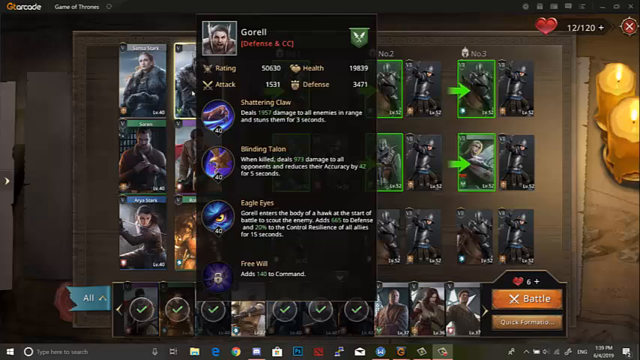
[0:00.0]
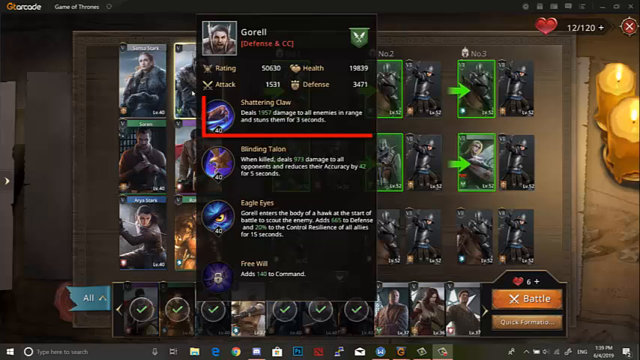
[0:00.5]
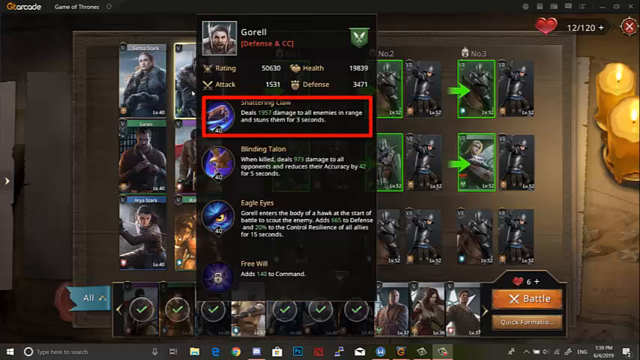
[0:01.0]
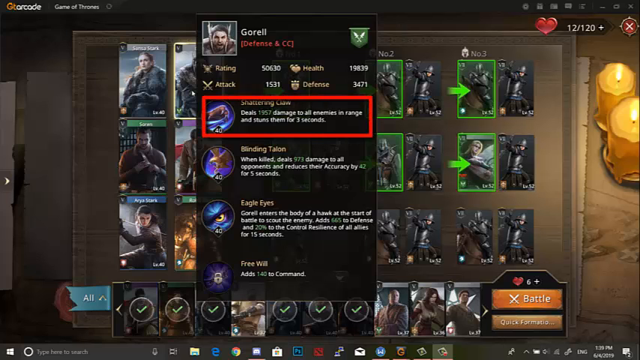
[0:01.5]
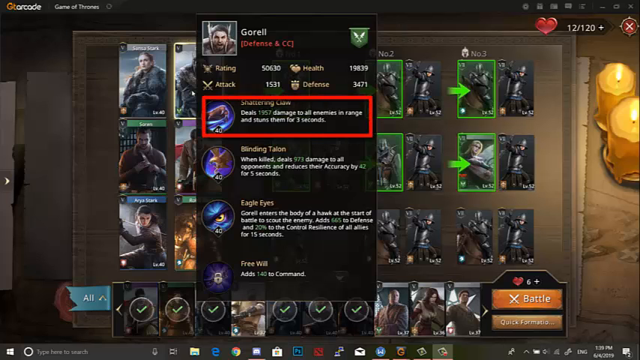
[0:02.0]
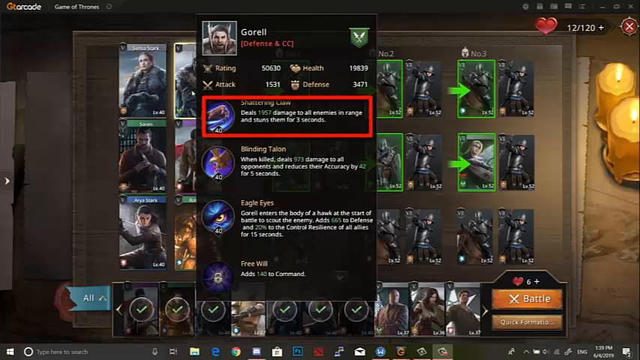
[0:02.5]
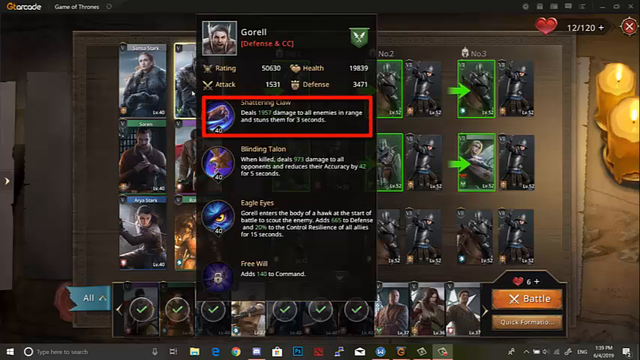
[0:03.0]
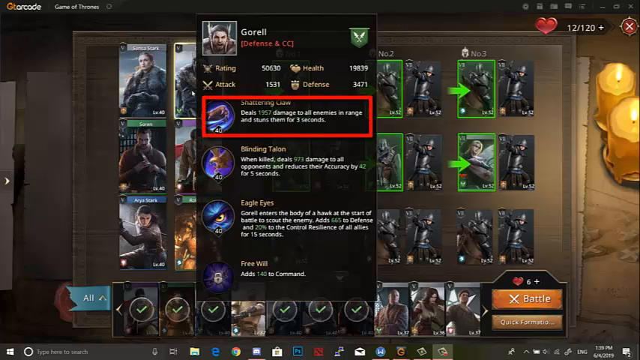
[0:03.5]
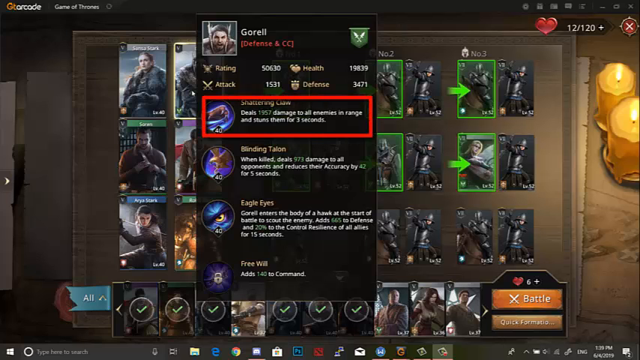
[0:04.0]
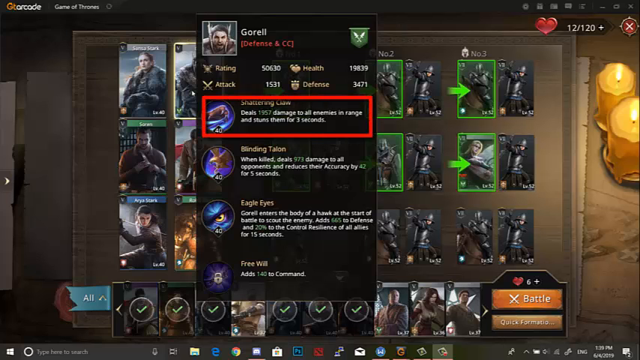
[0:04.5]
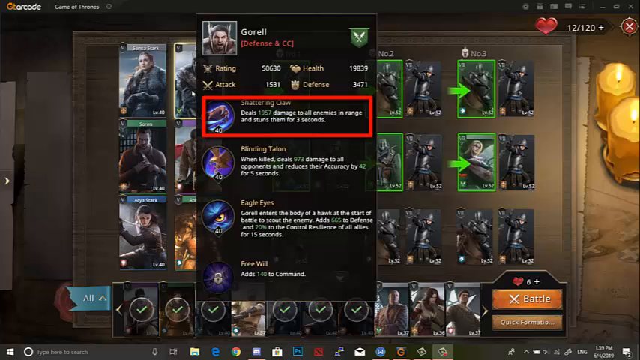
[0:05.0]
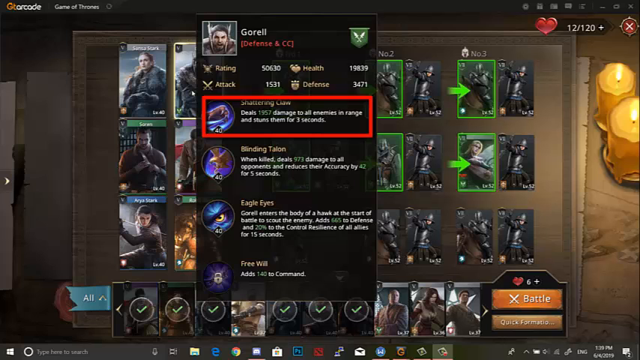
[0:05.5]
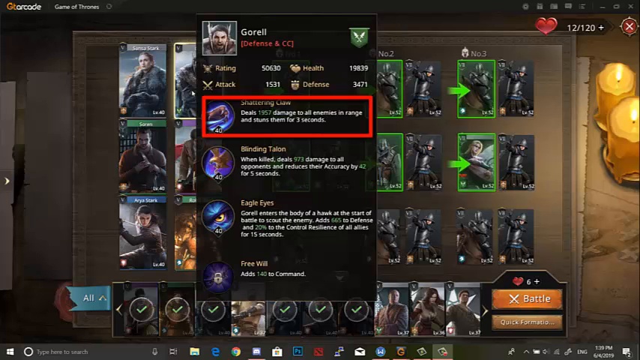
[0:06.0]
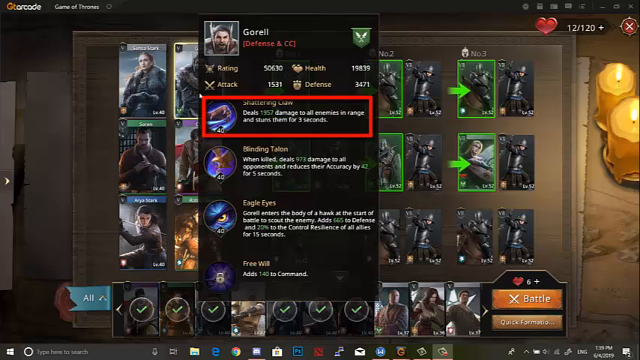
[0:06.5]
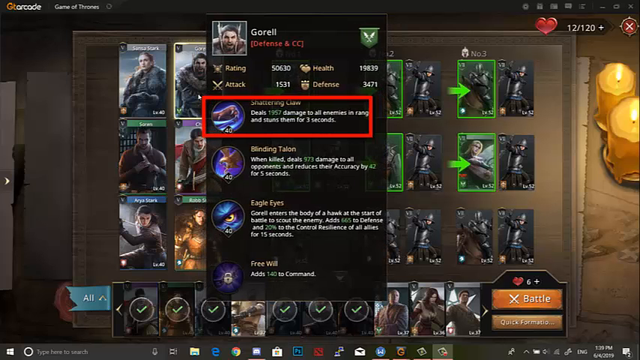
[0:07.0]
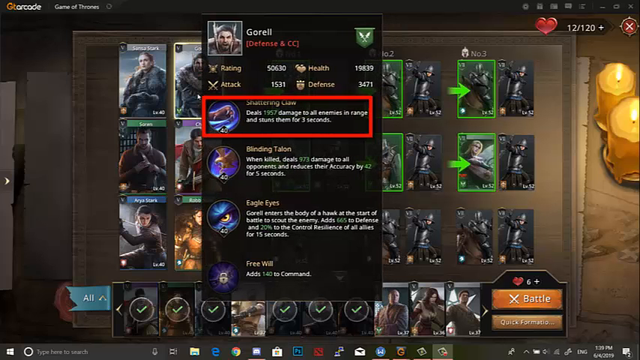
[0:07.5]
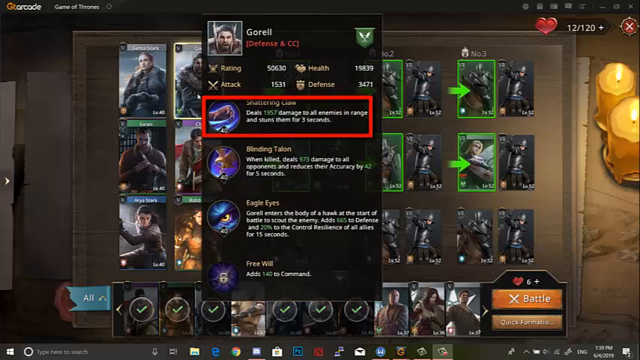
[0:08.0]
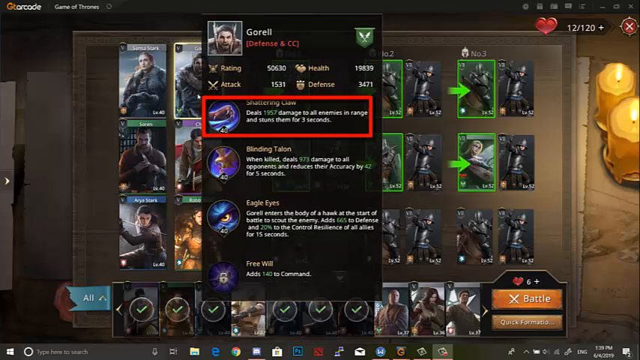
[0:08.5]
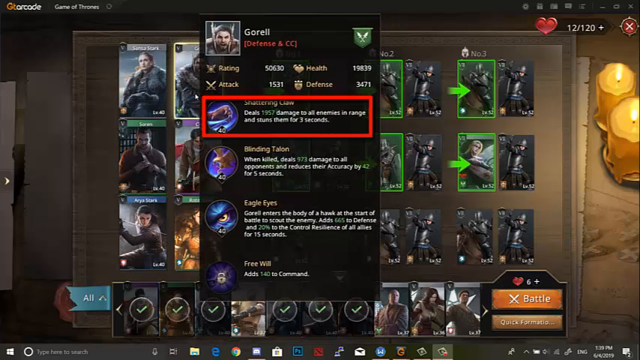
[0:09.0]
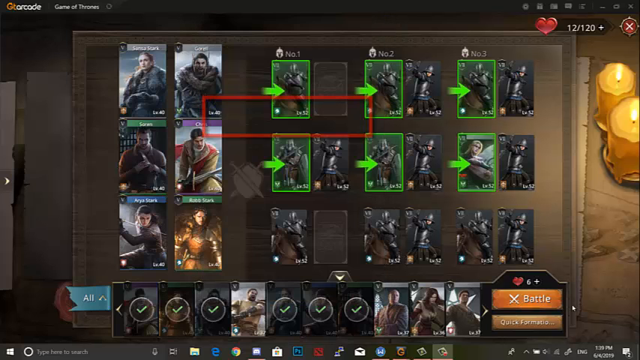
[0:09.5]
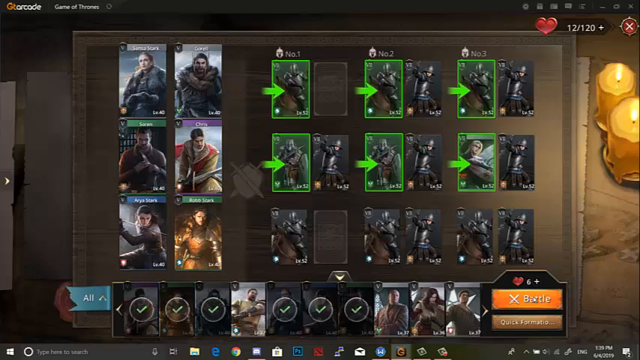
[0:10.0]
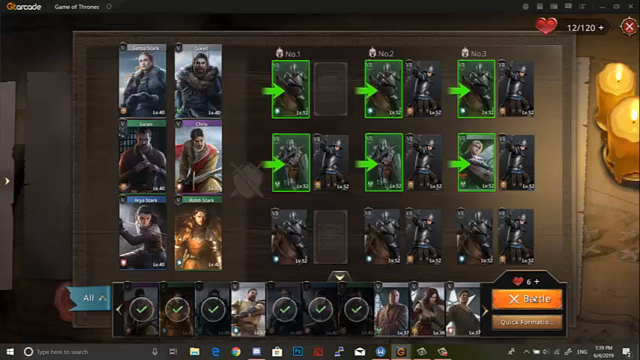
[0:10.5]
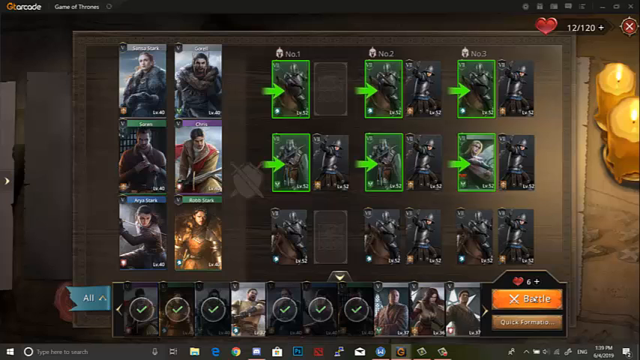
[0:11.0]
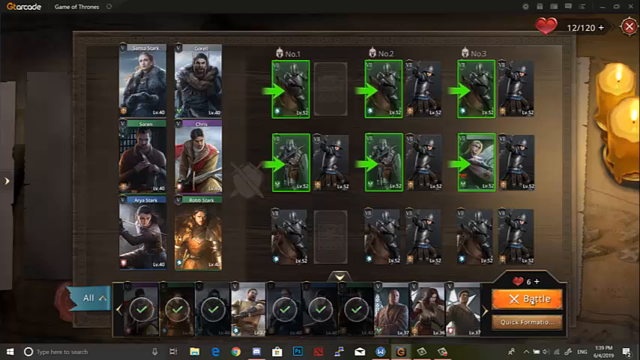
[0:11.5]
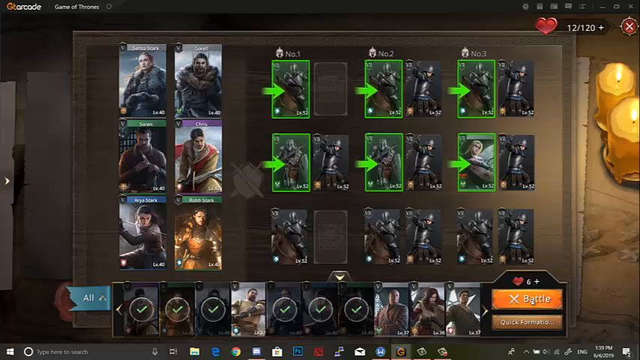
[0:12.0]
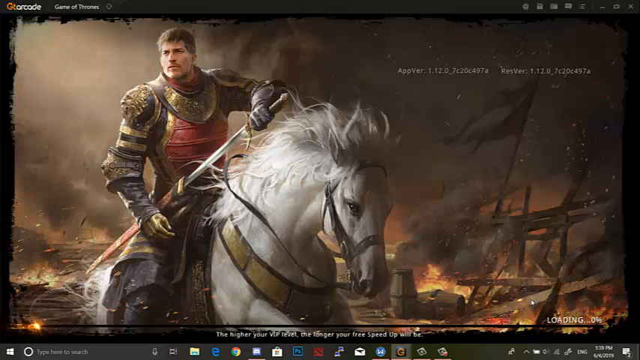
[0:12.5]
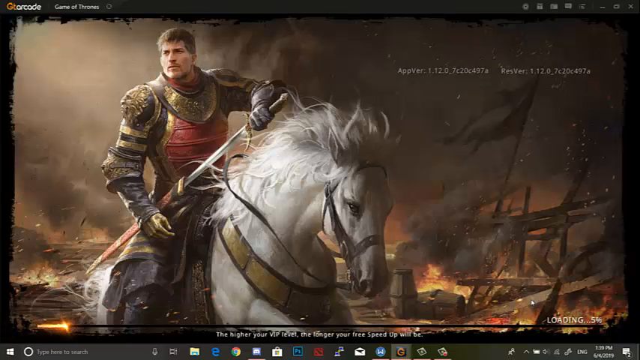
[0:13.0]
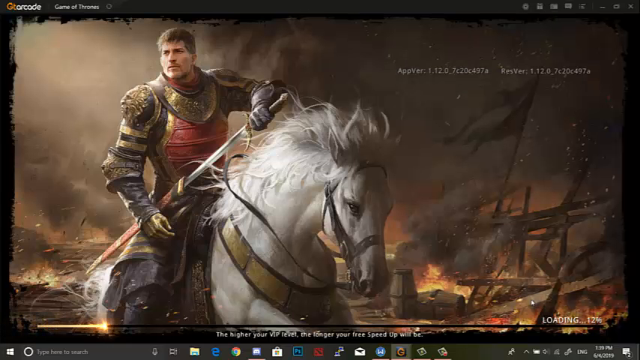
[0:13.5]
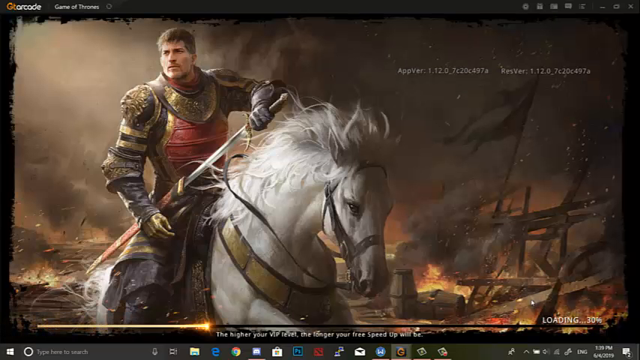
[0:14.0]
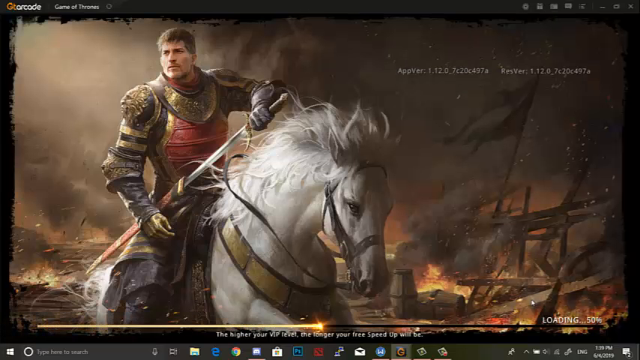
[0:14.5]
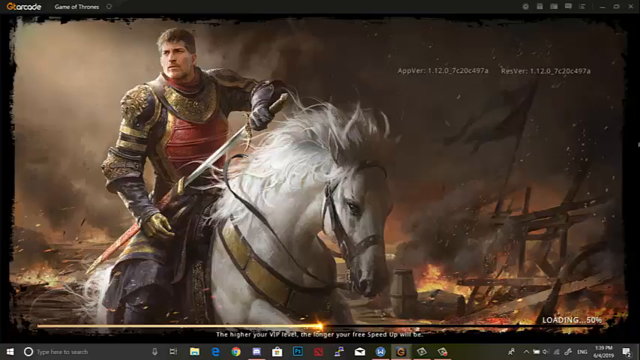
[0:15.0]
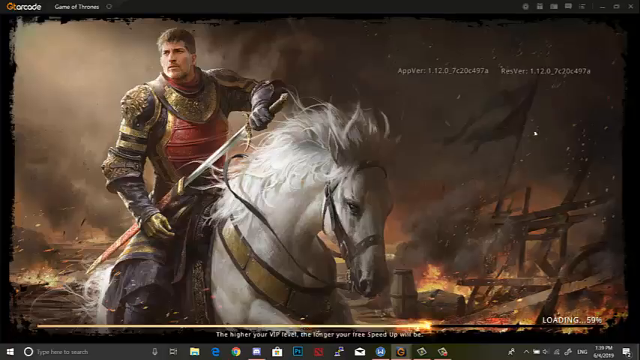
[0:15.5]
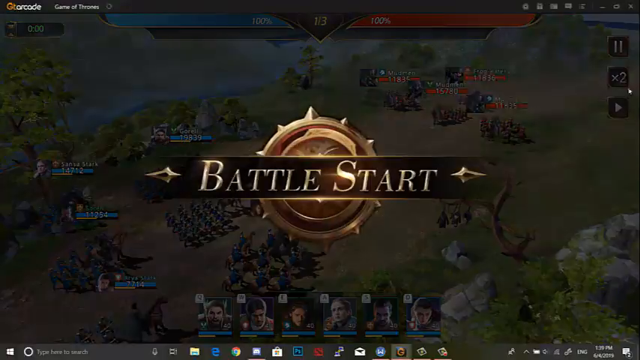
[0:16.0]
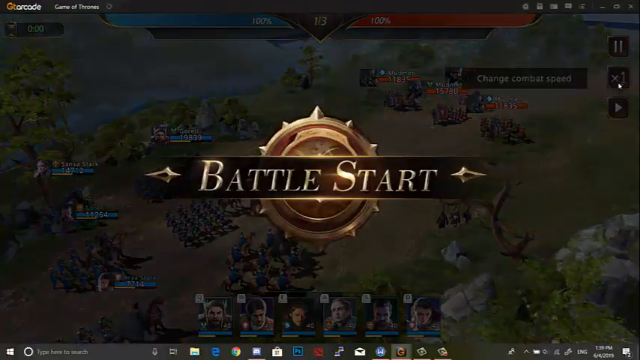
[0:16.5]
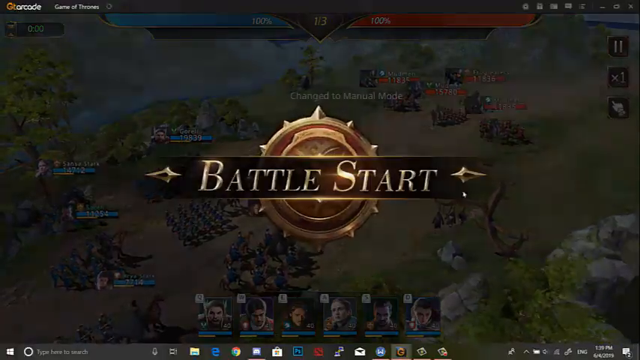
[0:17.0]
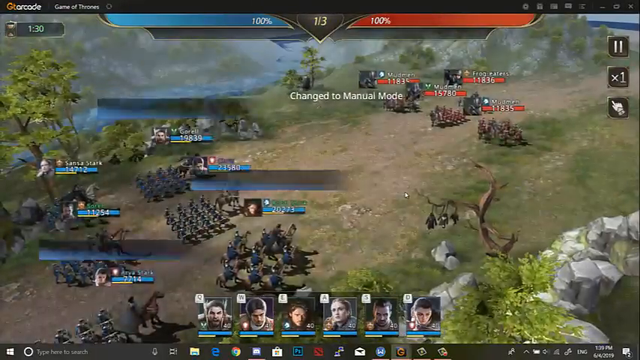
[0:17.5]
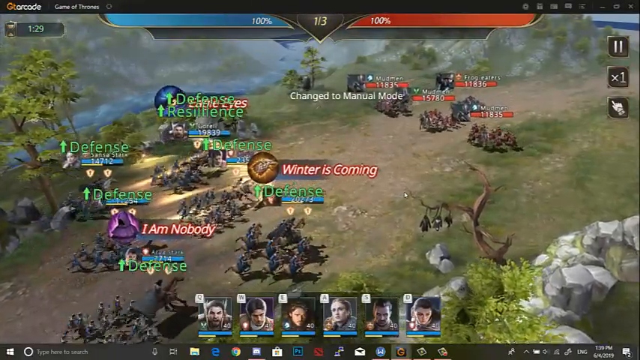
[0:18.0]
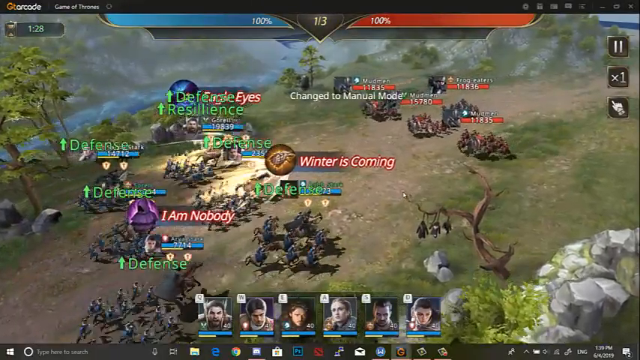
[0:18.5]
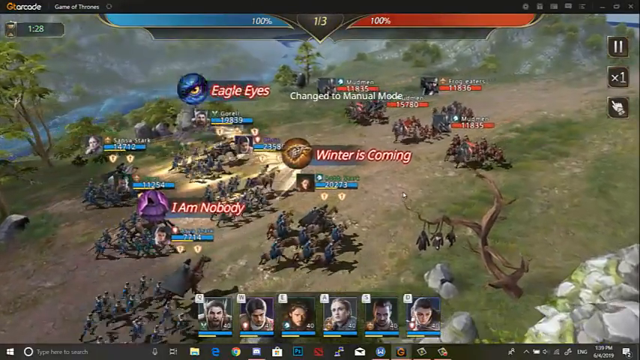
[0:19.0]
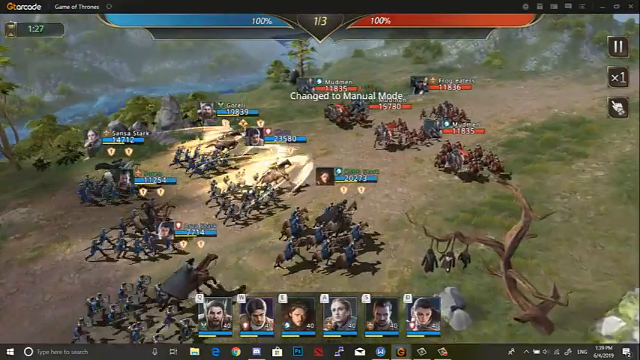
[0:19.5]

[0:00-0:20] The video seems to show gameplay from a game. It starts by looking at certain characters, which can be leveled up. Pop-ups on the screen show things such as "Shattering claw," which are things a character can do, and characters move around. The video shifts through different characters, showcasing what they can do, and a red line appears across the ground as one of a character's main abilities. The game is a Game of Thrones game. When the game starts, on-screen text includes the word "battle," followed by some gameplay in which teams go after each other. It is a role-playing game seen from above, where whole armies are controlled and take on other armies in rounds, possibly on mobile.